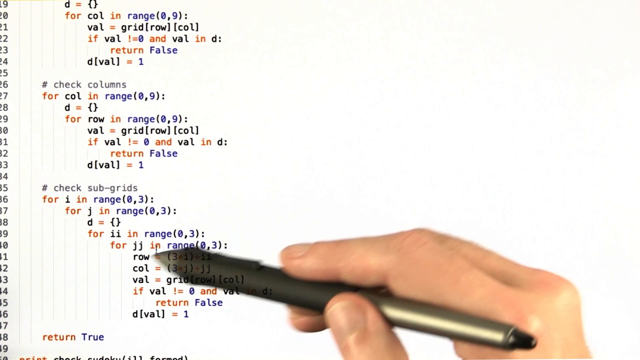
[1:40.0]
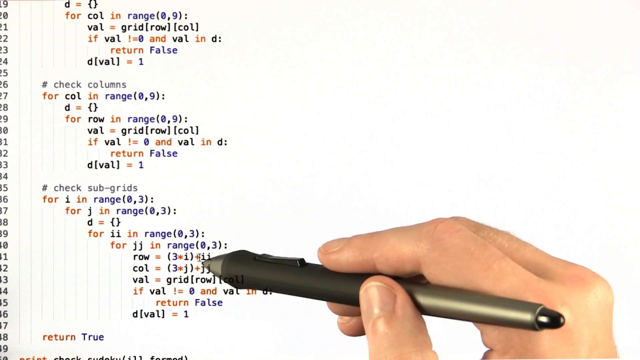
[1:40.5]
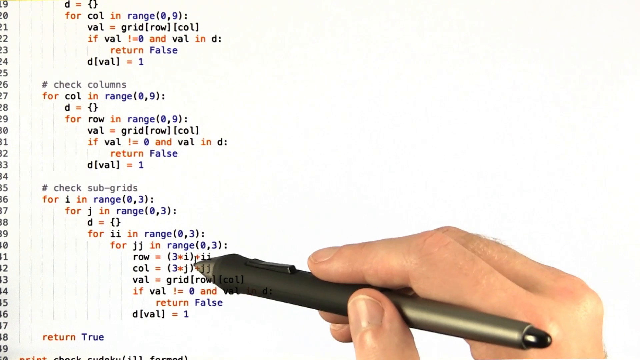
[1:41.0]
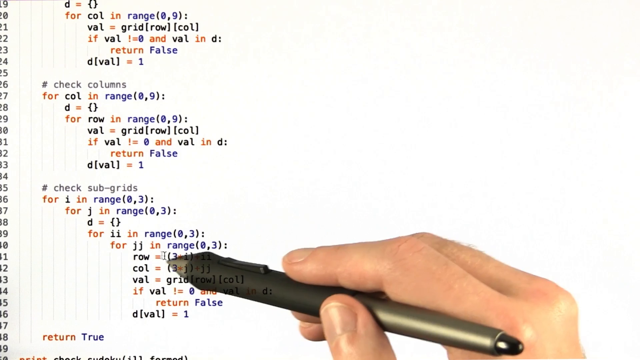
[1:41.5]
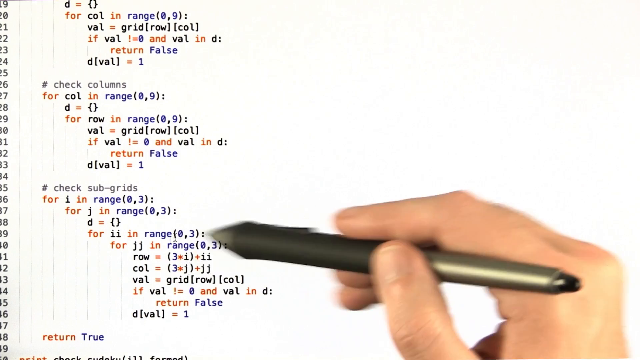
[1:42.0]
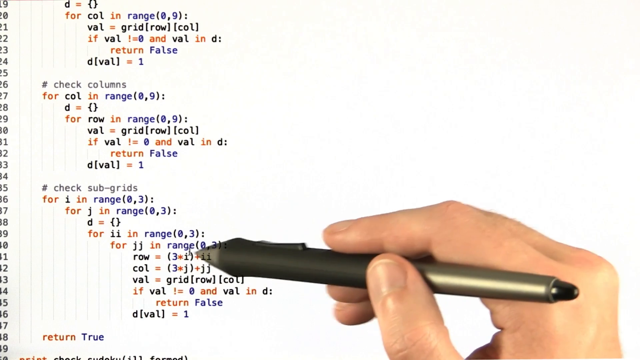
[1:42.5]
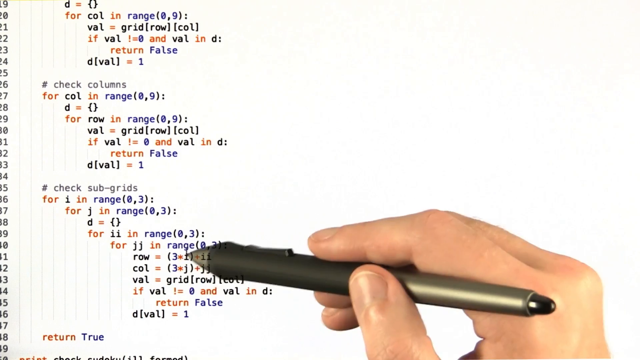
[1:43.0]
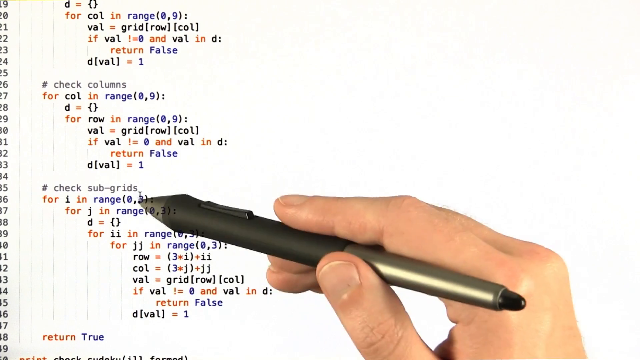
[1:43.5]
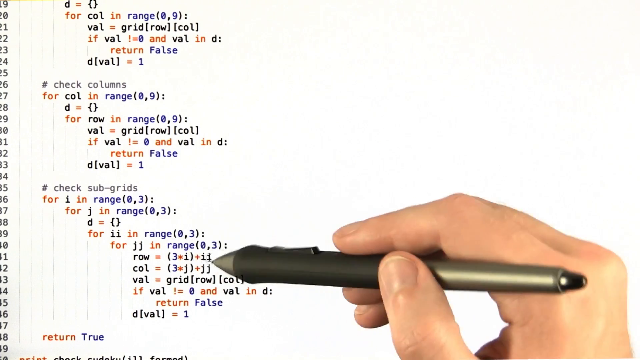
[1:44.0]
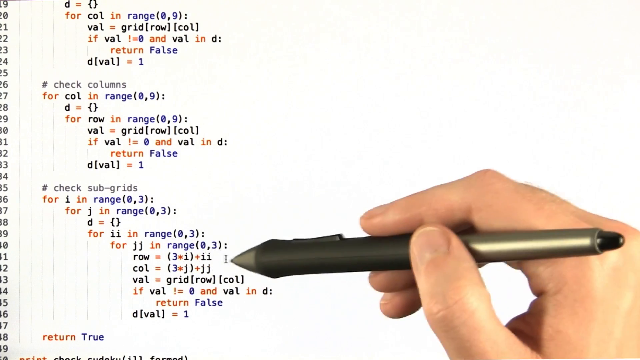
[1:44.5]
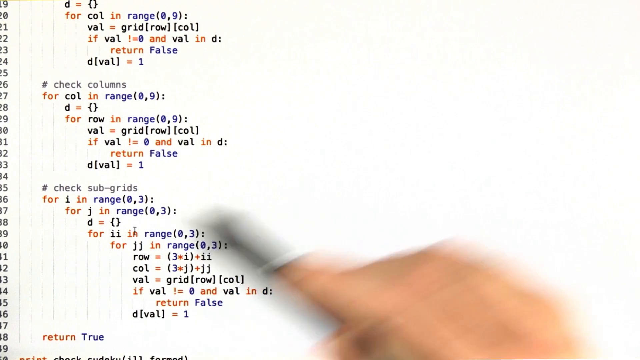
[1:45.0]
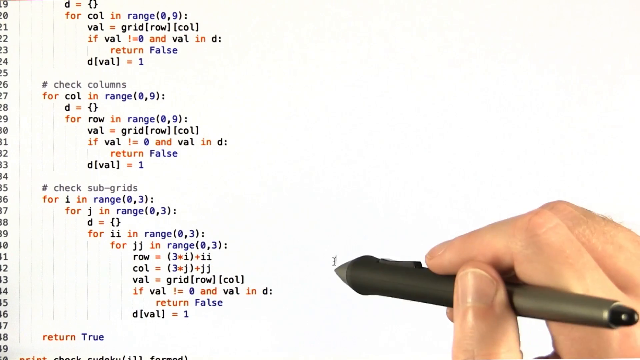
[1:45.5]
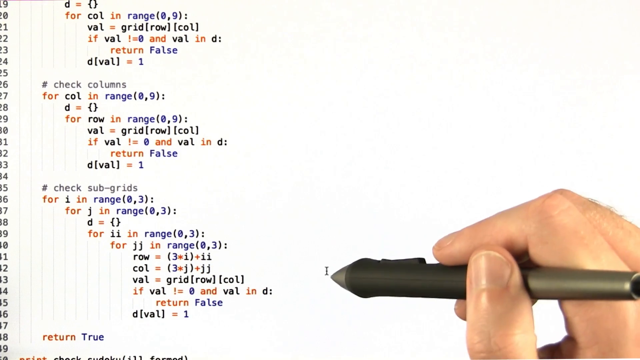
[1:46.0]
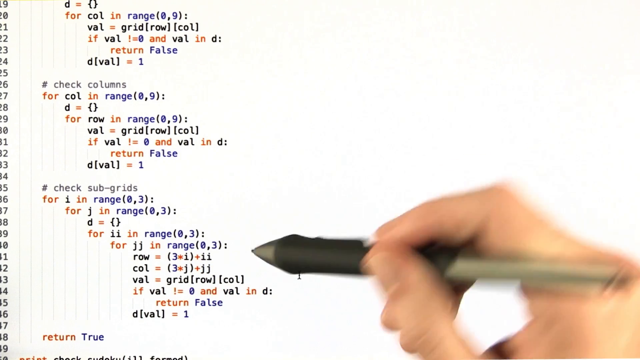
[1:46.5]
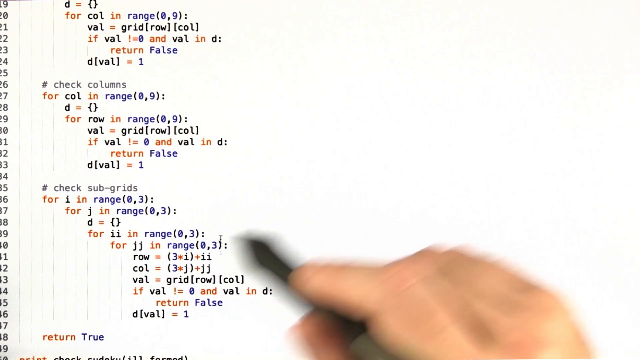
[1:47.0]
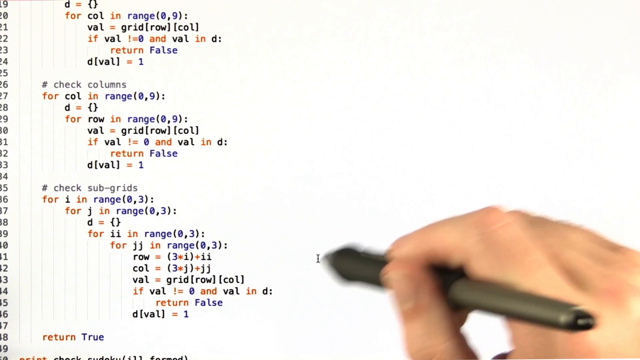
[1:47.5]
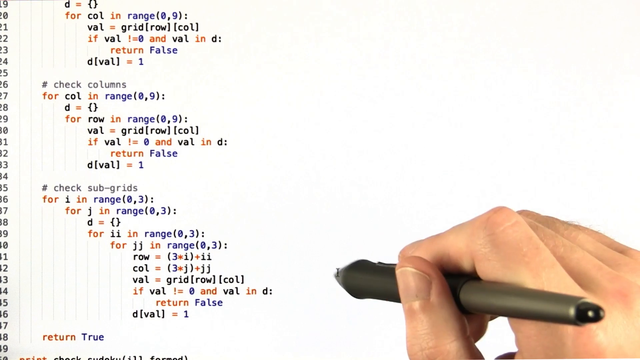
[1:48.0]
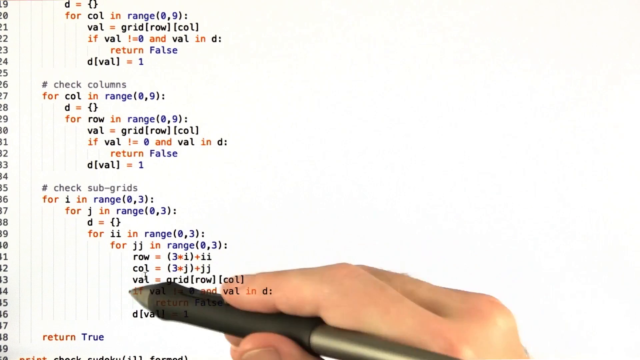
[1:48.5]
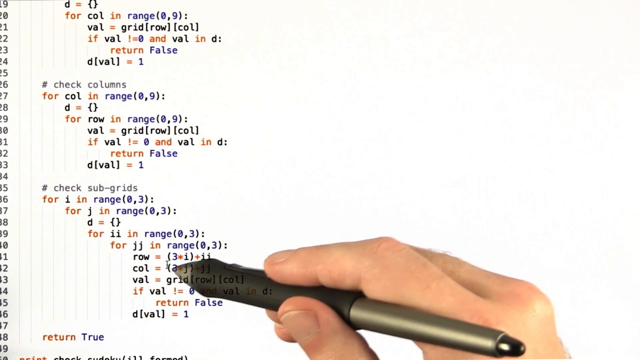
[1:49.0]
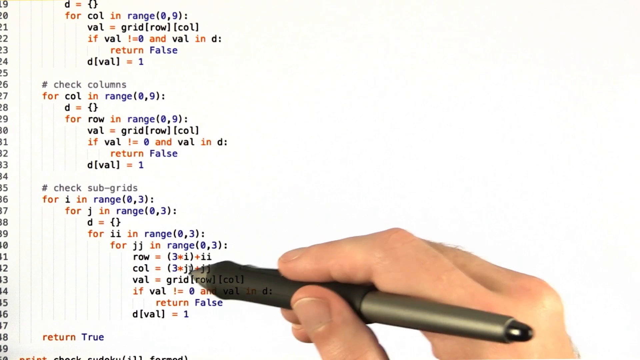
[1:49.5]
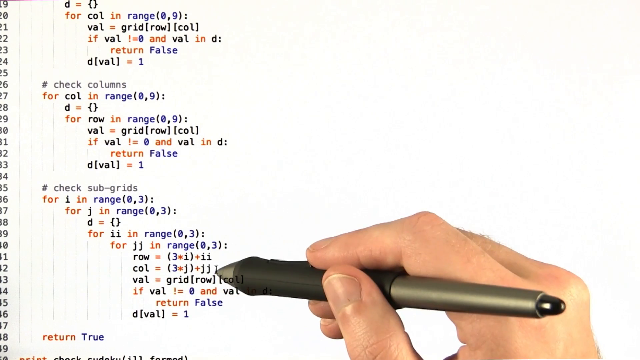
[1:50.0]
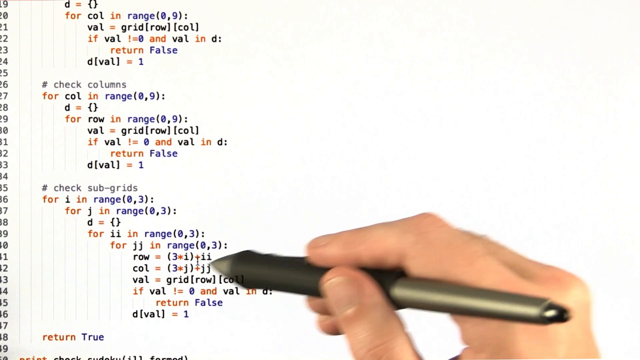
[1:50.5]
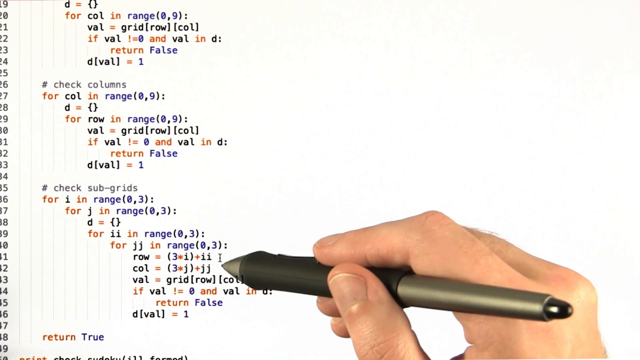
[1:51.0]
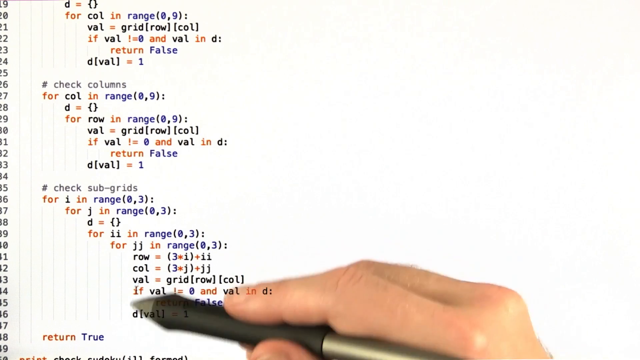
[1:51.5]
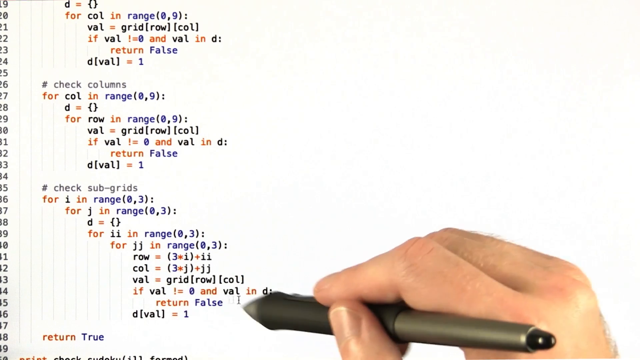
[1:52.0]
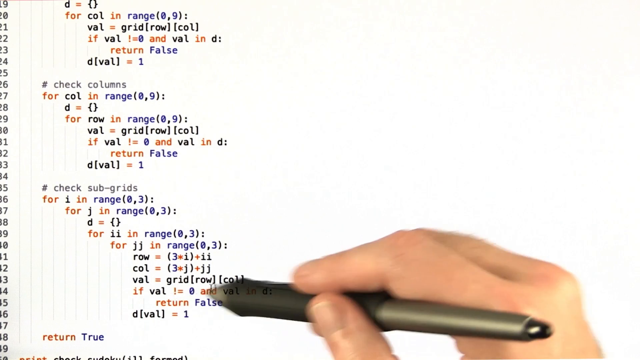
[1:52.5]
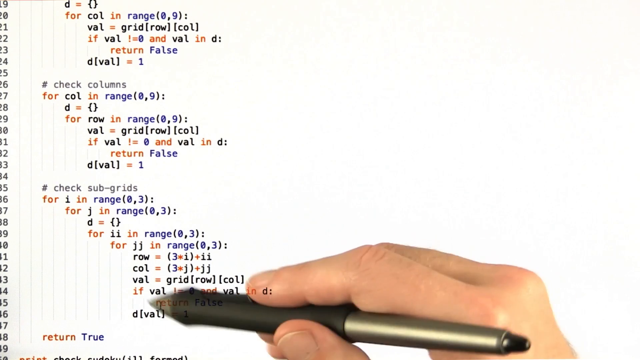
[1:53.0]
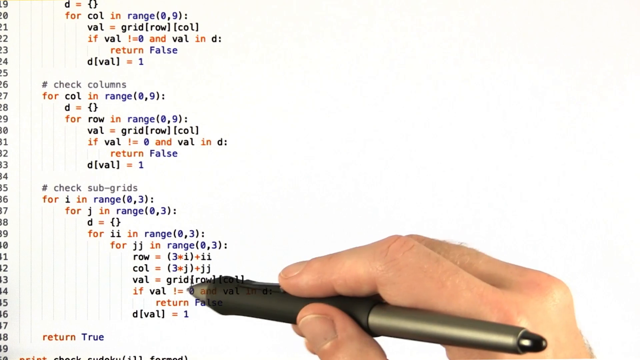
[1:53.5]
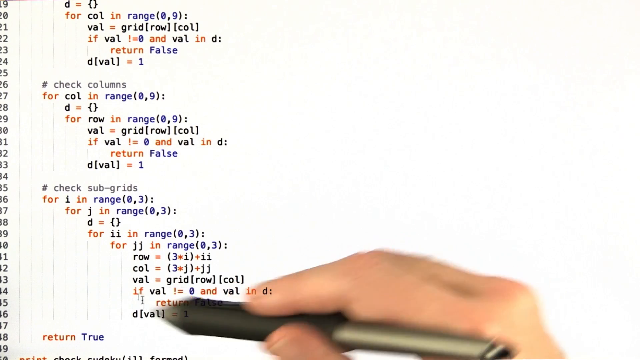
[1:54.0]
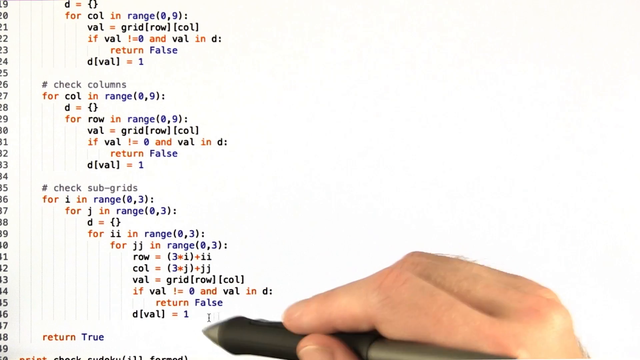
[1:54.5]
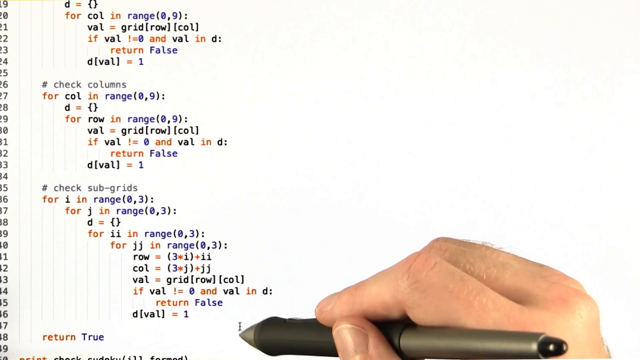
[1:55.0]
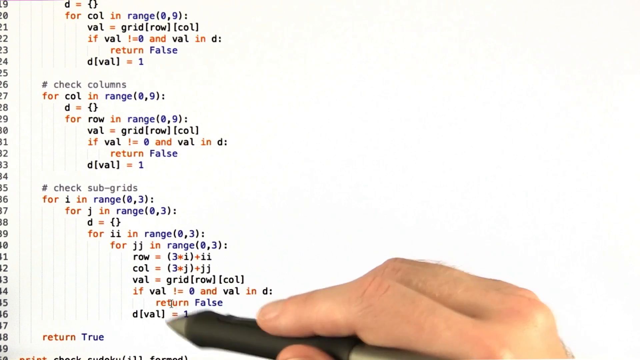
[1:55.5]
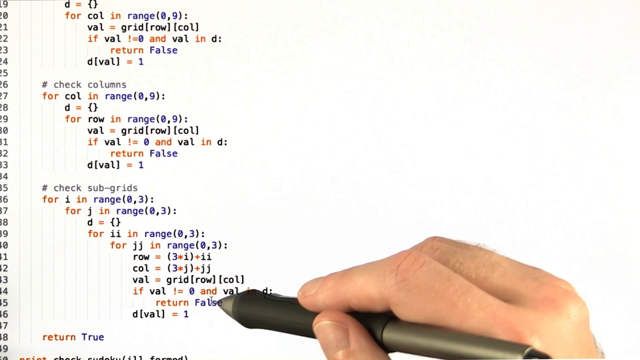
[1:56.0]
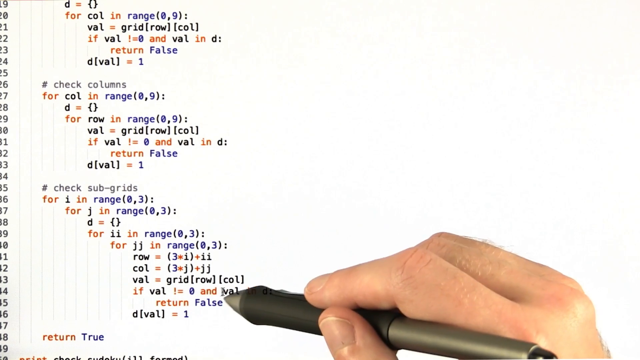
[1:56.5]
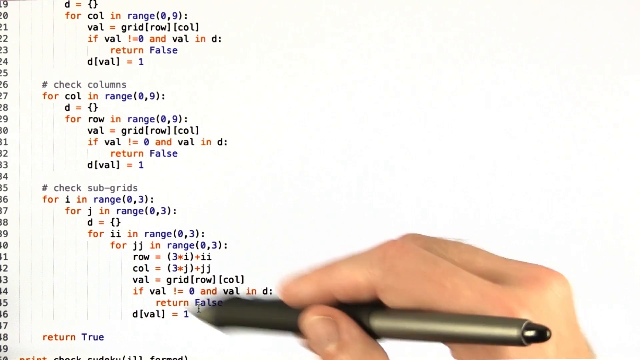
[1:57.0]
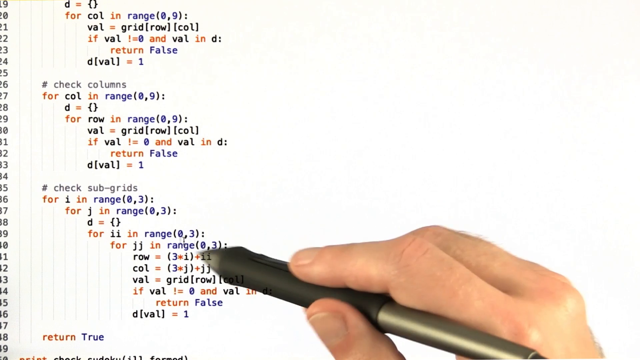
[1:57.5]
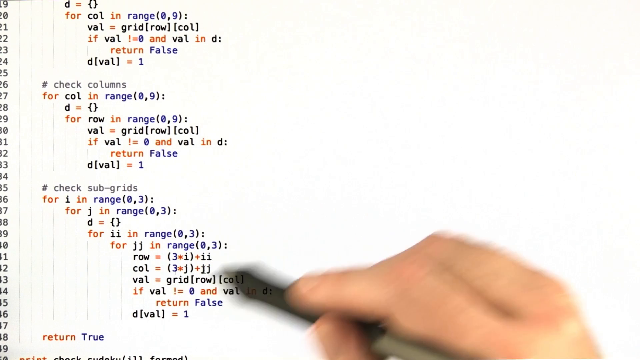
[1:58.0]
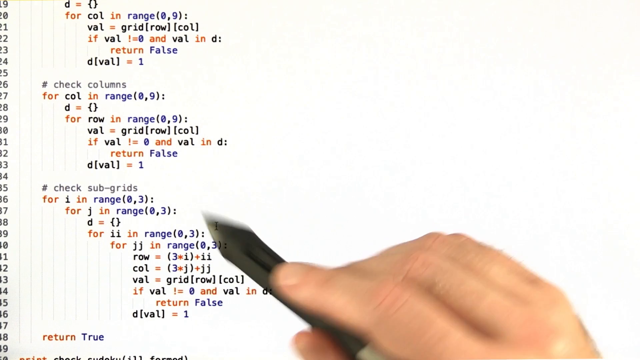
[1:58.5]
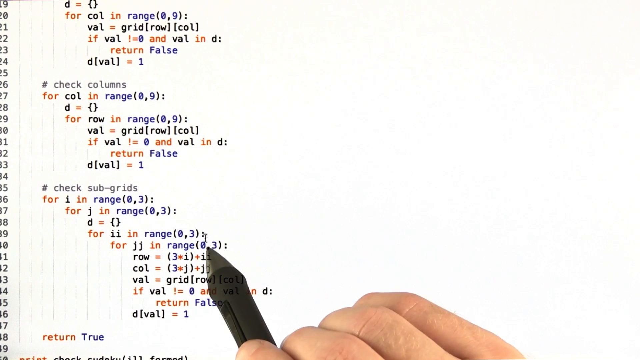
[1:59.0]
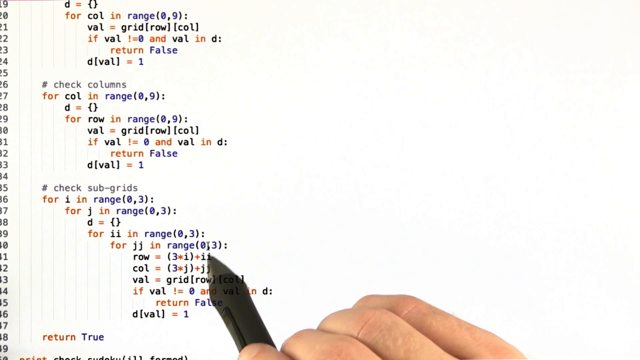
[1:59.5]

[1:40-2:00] A person holds a digital pen in the right hand and focuses on the bottom third of the screen, moving back and forth over that area of code, probably explaining it. The screen has a white background with a faint white grid, orange, blue and black font, and row numbers on the left-hand side. The code is divided into three sections: the top group has about six lines, the second about eight, and the person is on the third group. This section has a comment that says "check subgroups" or "subgrids", followed by several for statements, each indented further down the code. The pen is held around one part containing row, column and value, with equal signs to the right.